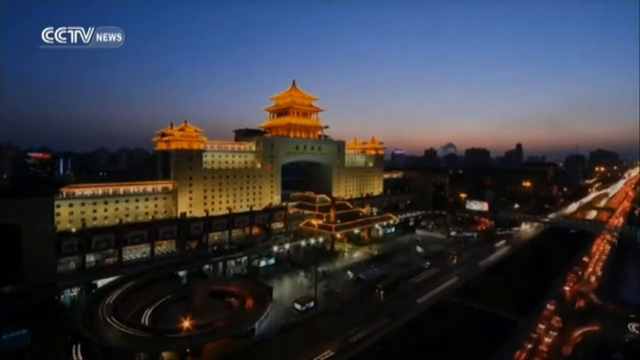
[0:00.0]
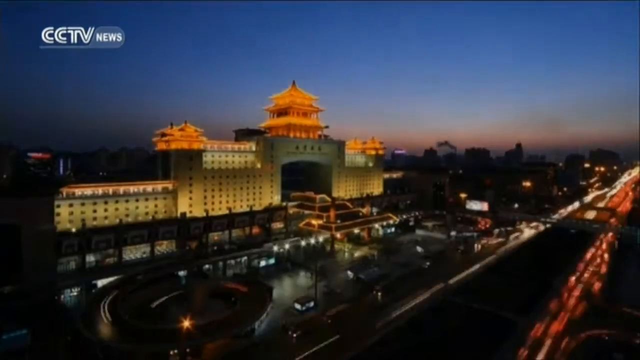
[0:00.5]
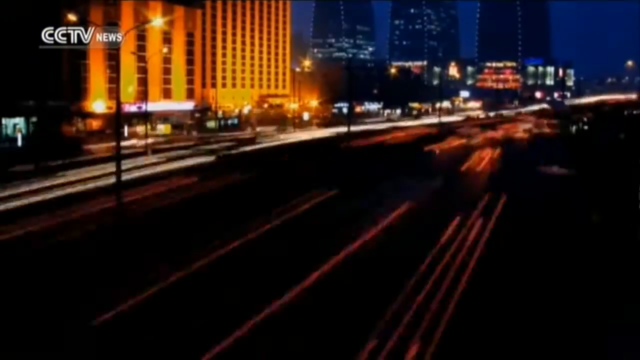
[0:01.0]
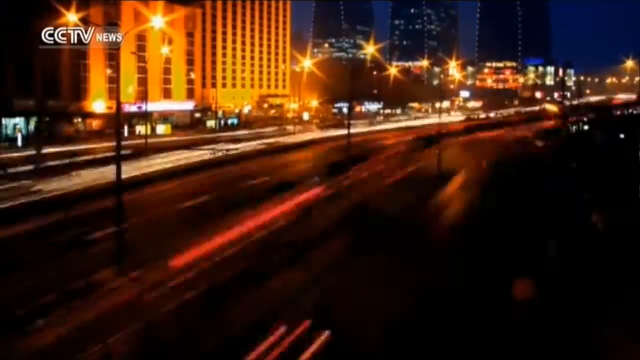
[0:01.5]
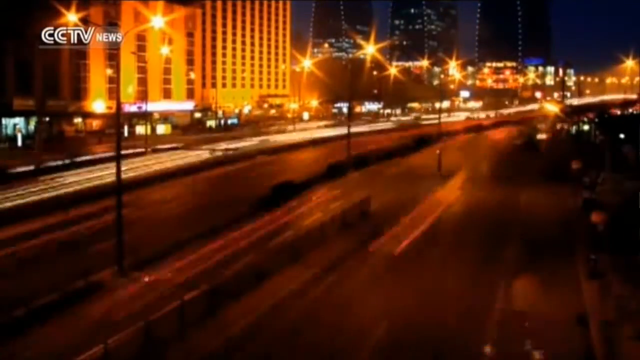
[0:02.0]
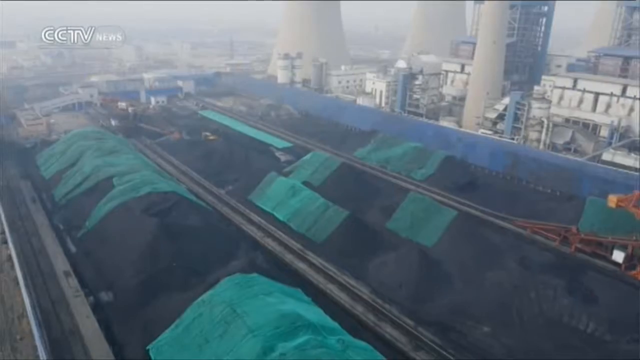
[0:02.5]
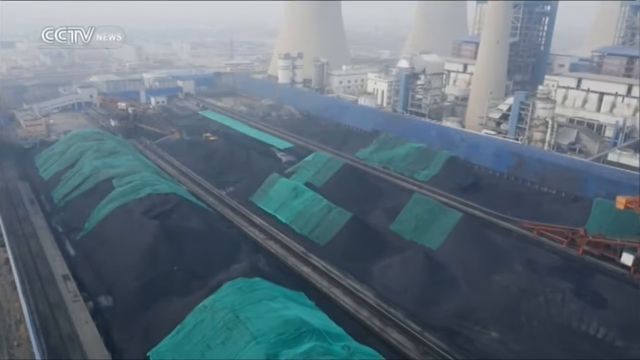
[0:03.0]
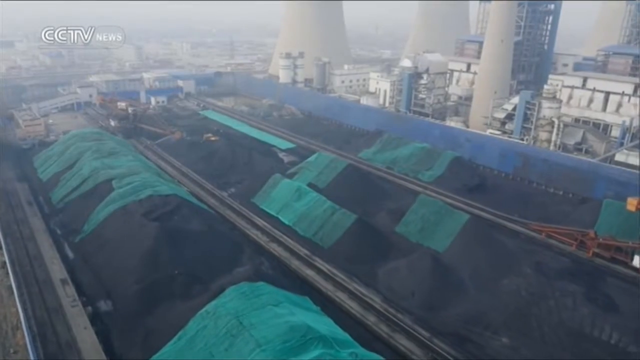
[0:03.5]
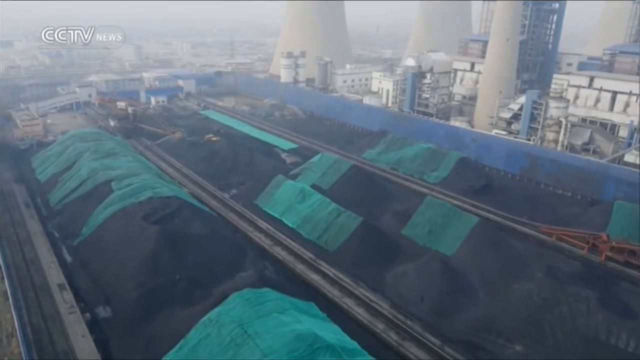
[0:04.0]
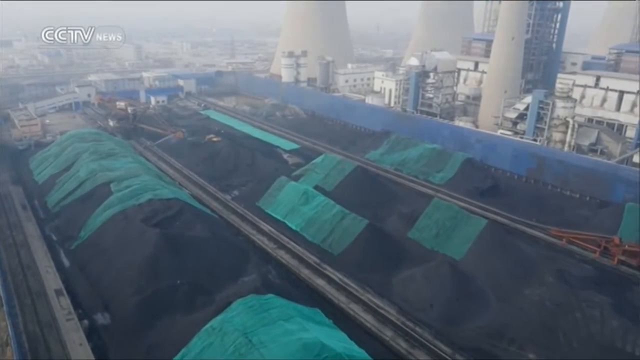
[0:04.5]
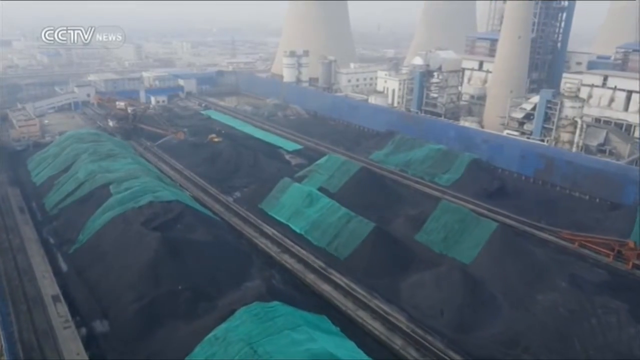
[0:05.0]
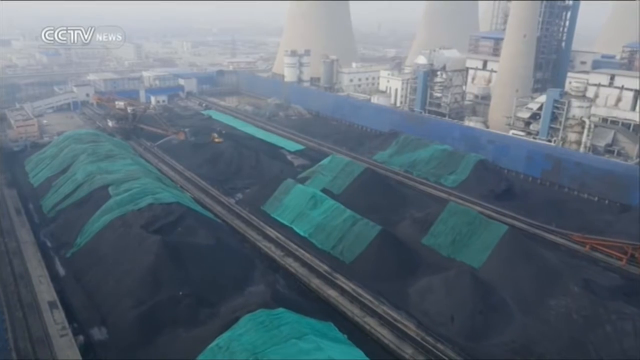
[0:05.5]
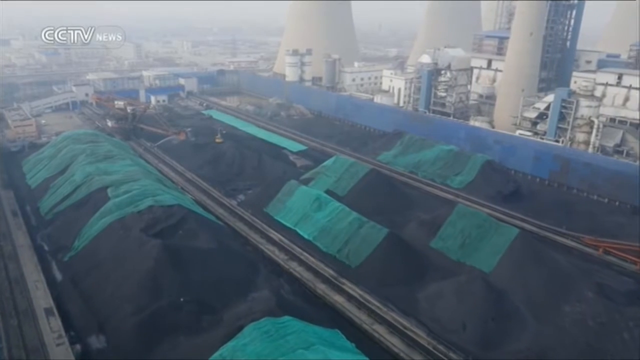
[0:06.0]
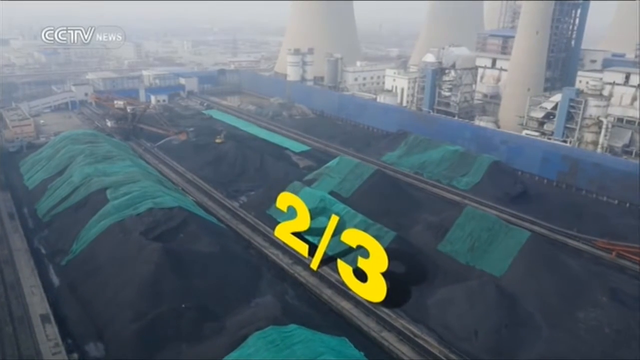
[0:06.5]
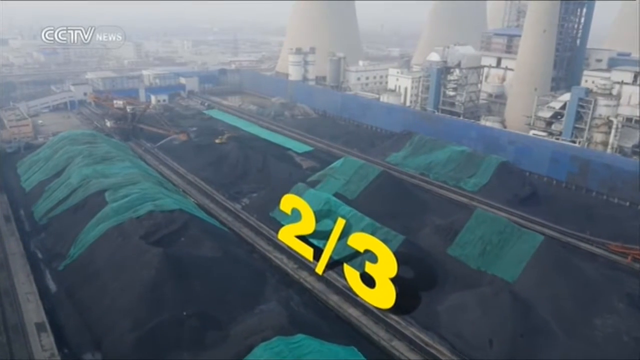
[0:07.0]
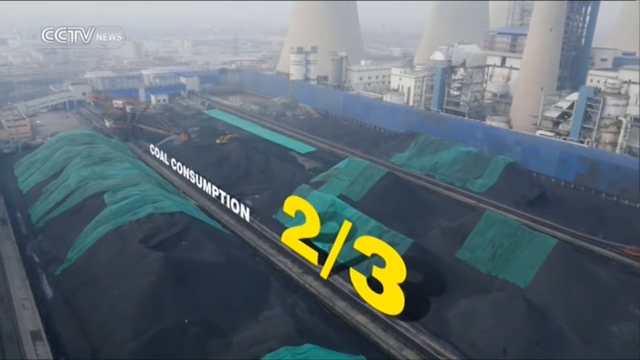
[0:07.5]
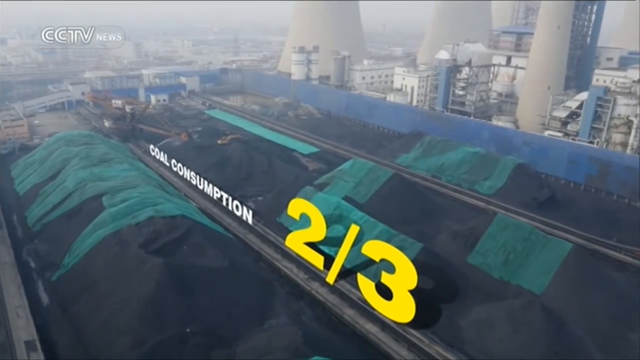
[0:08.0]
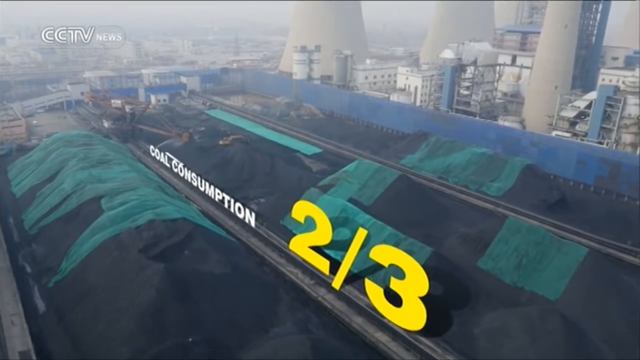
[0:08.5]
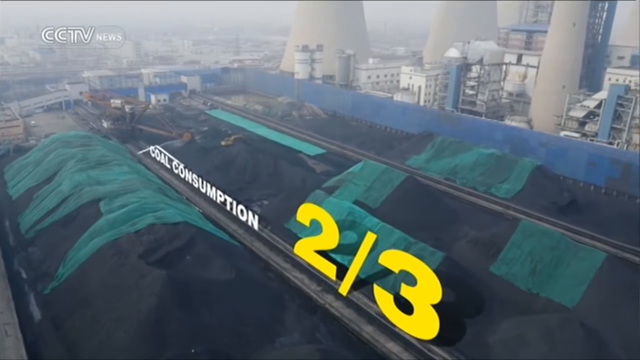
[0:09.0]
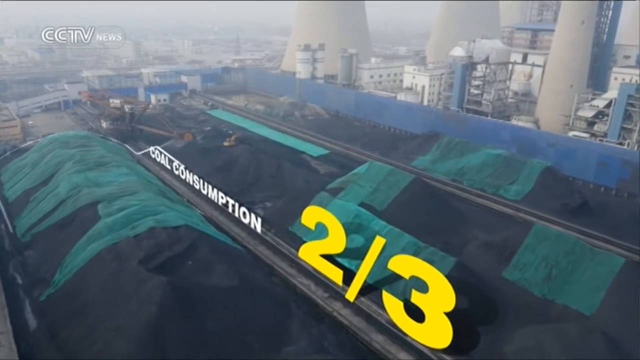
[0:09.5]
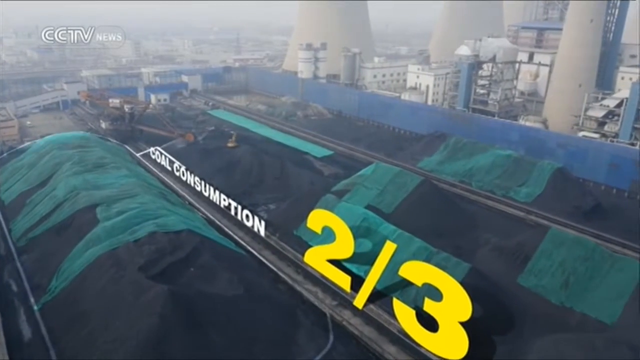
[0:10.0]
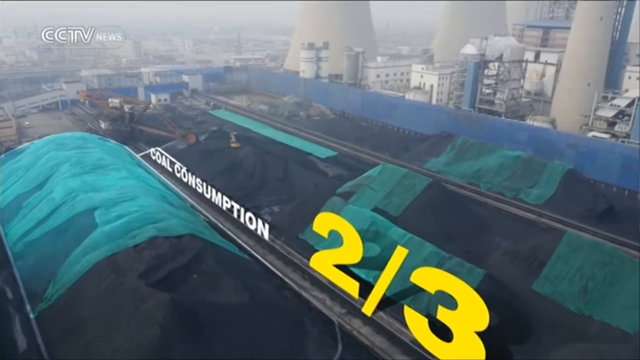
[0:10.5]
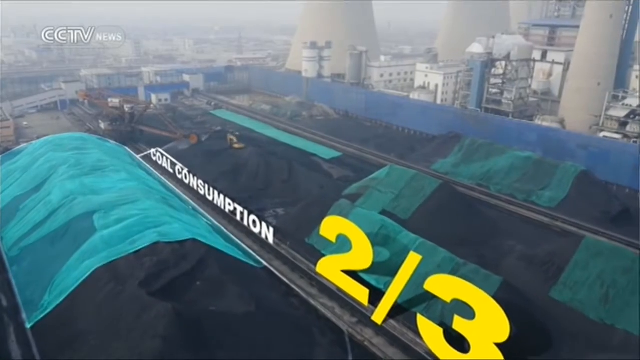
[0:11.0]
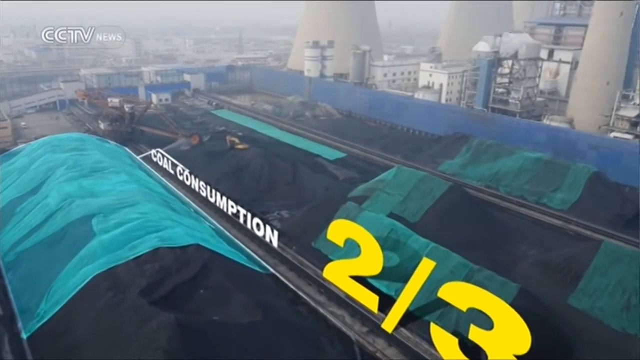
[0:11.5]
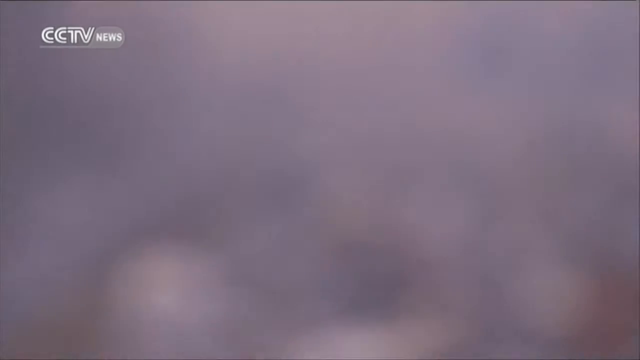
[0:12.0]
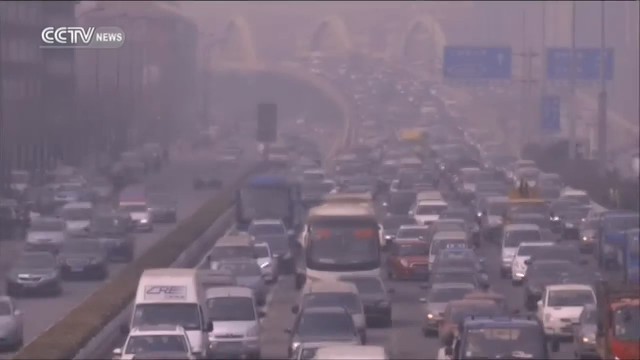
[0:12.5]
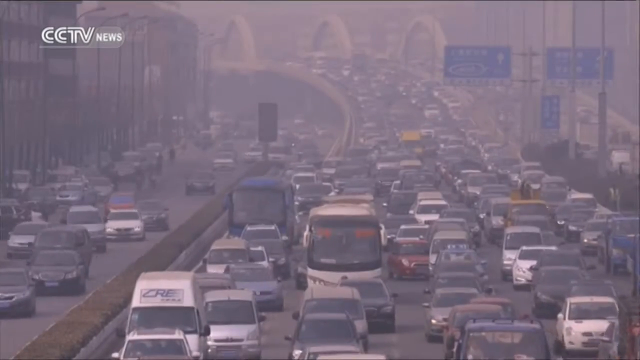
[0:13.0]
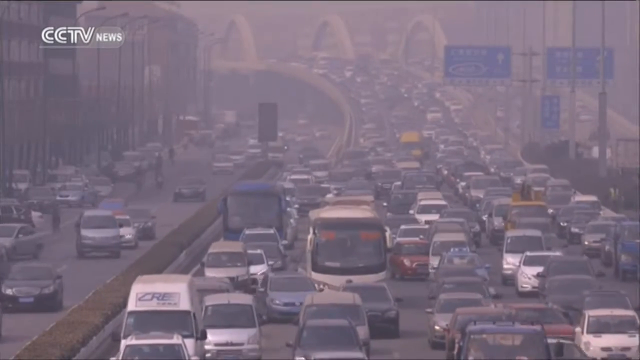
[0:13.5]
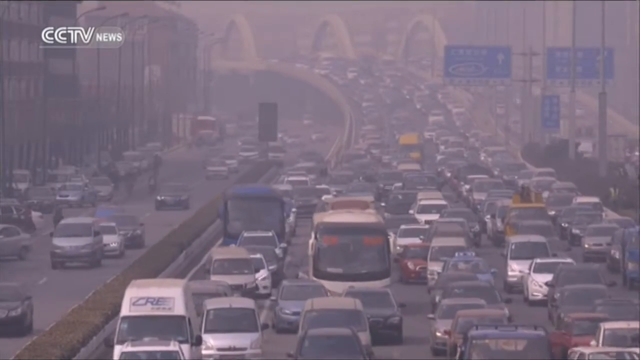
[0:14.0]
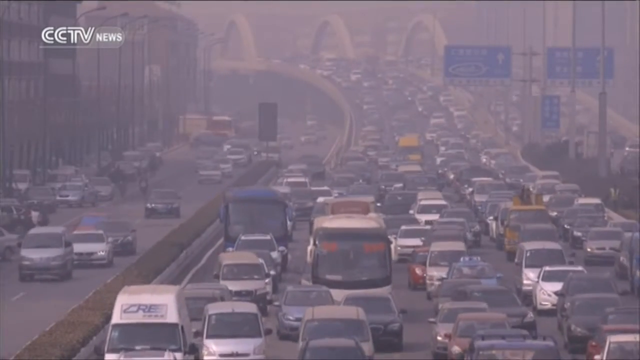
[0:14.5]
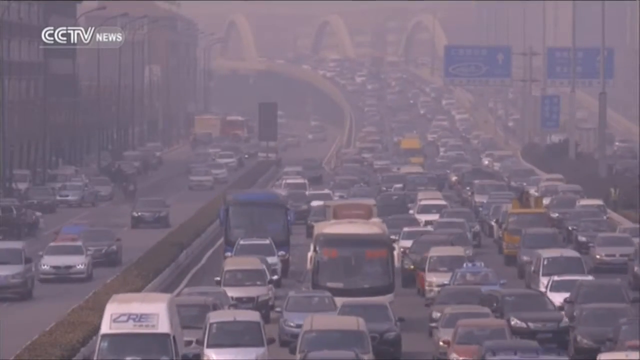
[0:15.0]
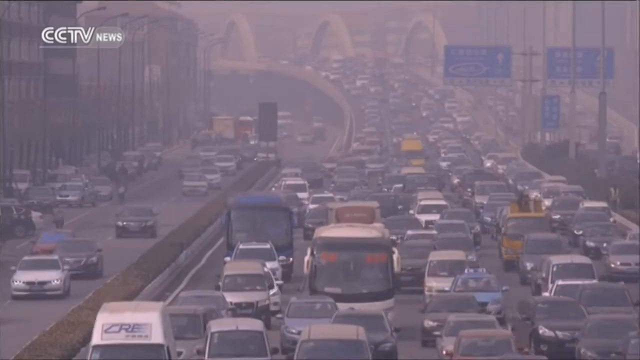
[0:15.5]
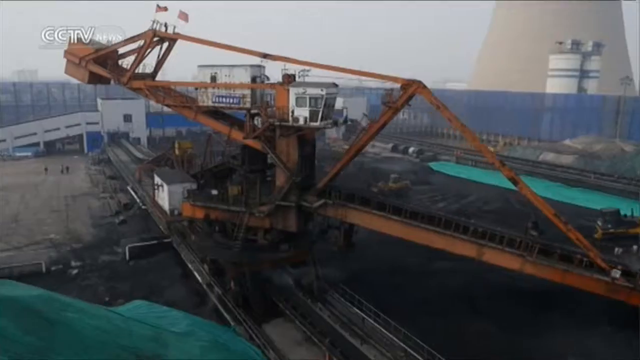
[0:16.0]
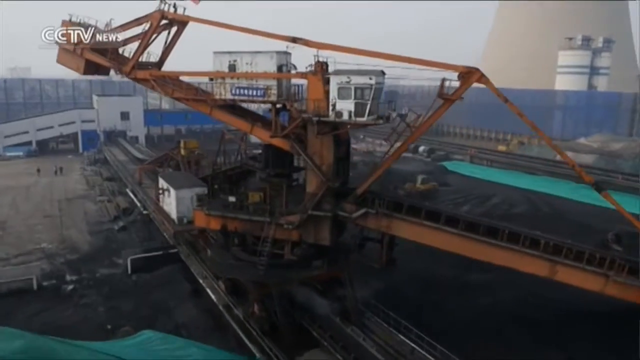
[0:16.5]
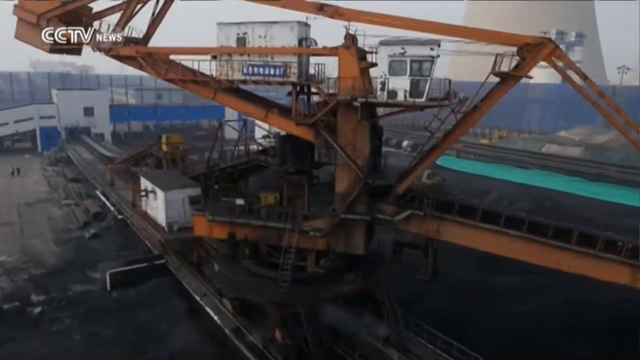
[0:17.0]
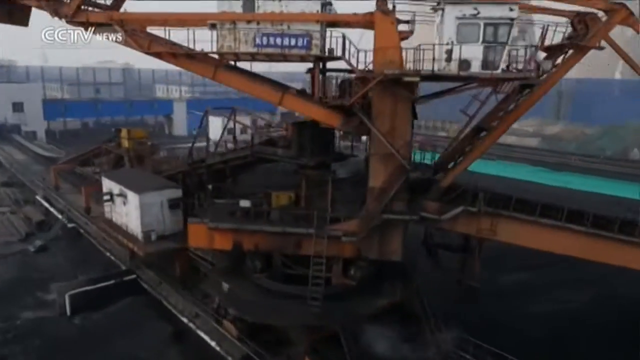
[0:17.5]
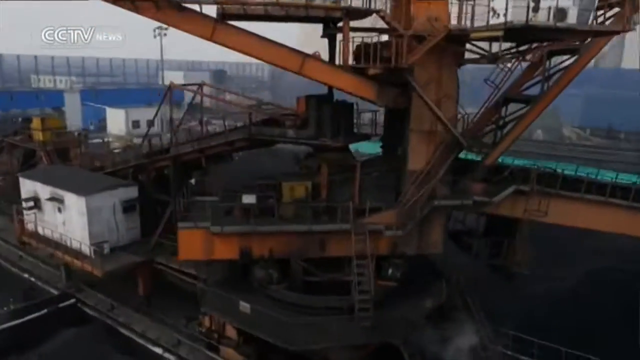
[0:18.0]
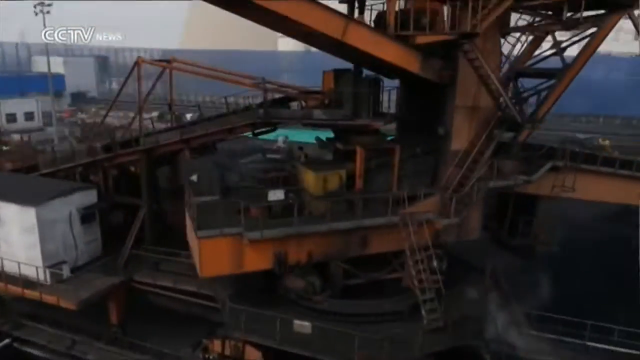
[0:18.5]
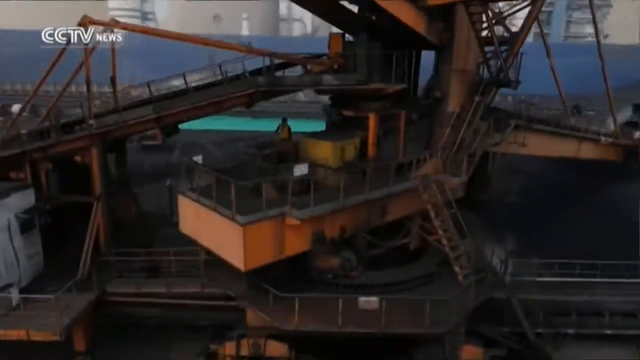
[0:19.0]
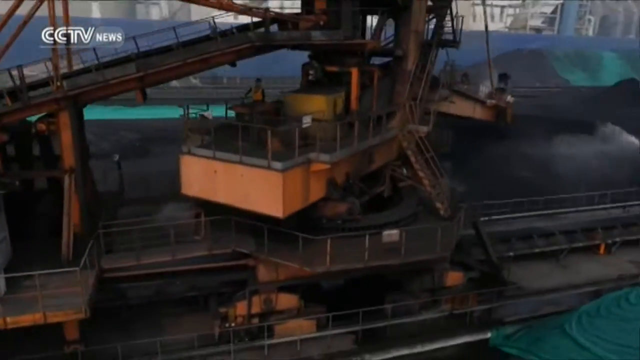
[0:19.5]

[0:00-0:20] Traffic drives down a street at night past buildings; it is dark, but there are streetlights. Text then reads "coal consumption" and "two-thirds," with "two-thirds" in yellow and "coal consumption" in white. A highway with lots of traffic appears, with "CCTV" on the left. The buildings return: they have lit-up pyramid tops, the sky is a deep blue with pink toward the bottom, and one building has lots of different lights on it while the traffic moves very fast. The "CCTV news" view shows the coal consumption two-thirds text again, along with green and black tarp. Next comes a very congested highway with people in cars, buses and on motorcycles; the cars on the left side move faster than those on the right. There are blue signs and white arches on the overpass where they drive. A big orange crane appears, with "CCTV news" in the top left and blue and white buildings, and a man sits there working the machinery.